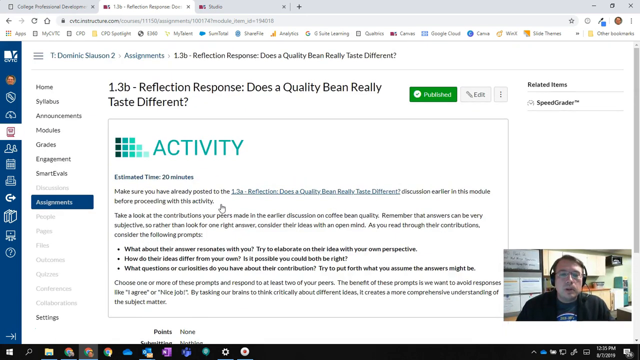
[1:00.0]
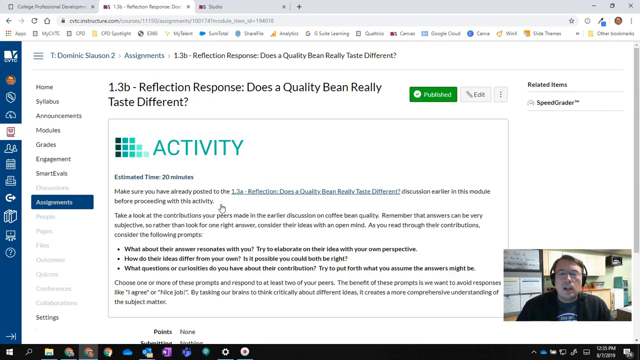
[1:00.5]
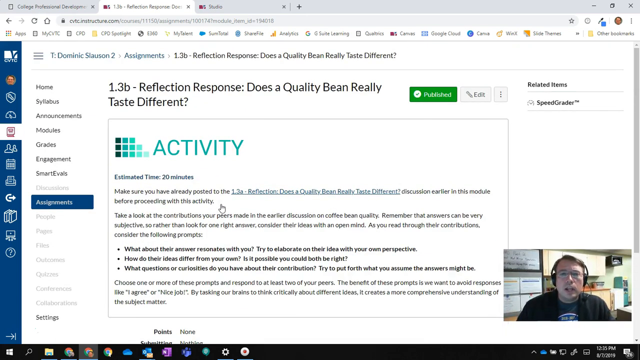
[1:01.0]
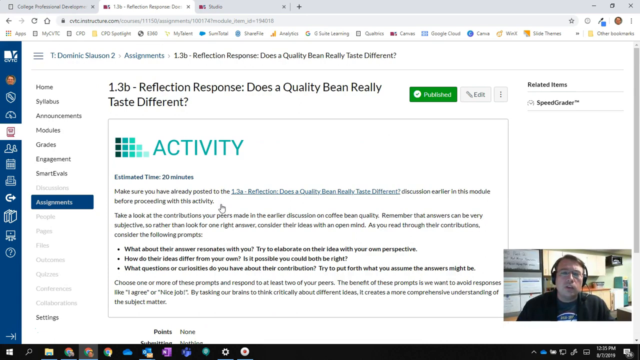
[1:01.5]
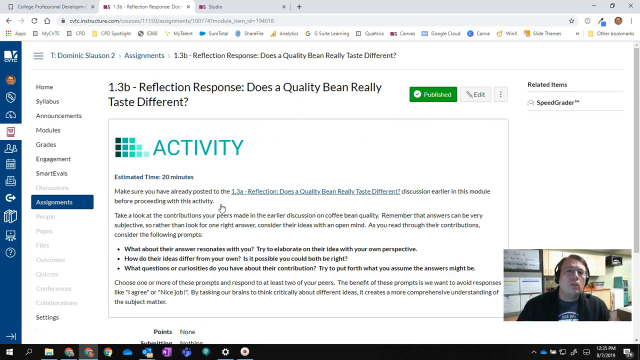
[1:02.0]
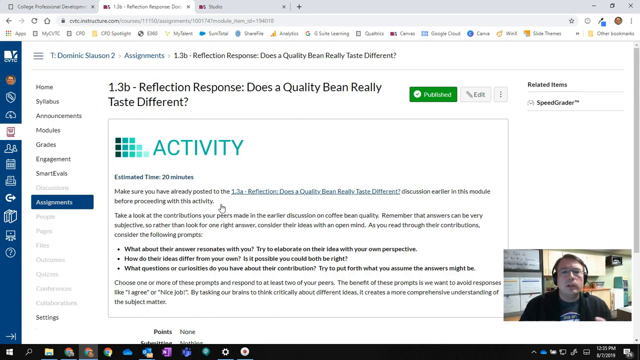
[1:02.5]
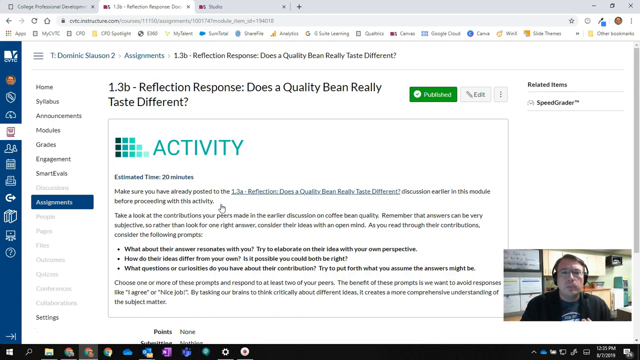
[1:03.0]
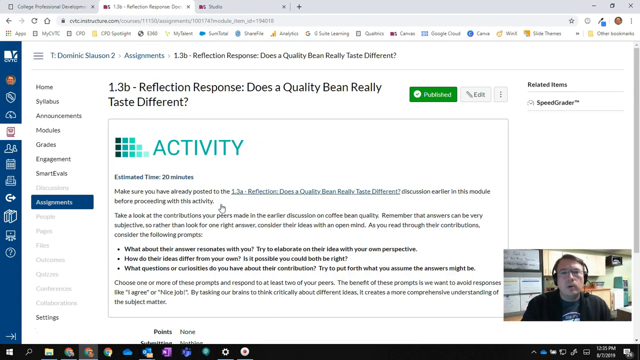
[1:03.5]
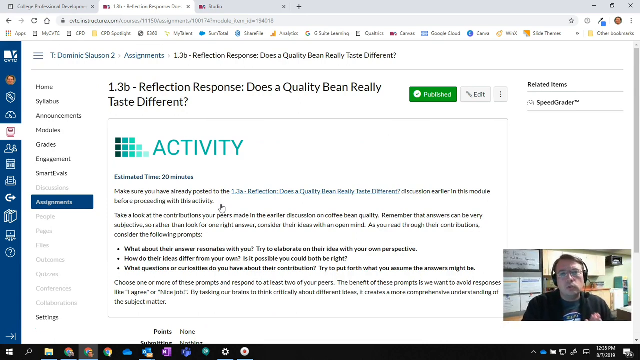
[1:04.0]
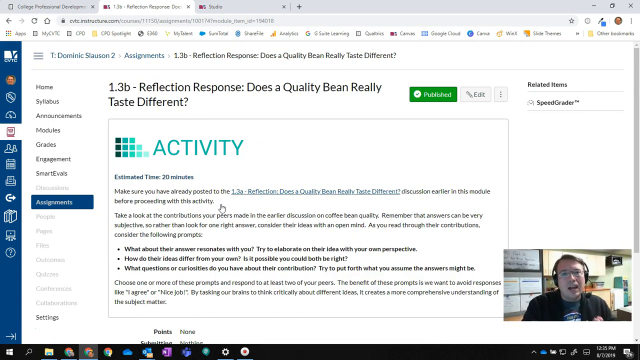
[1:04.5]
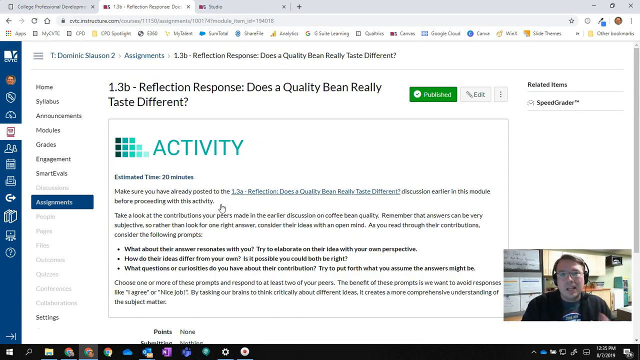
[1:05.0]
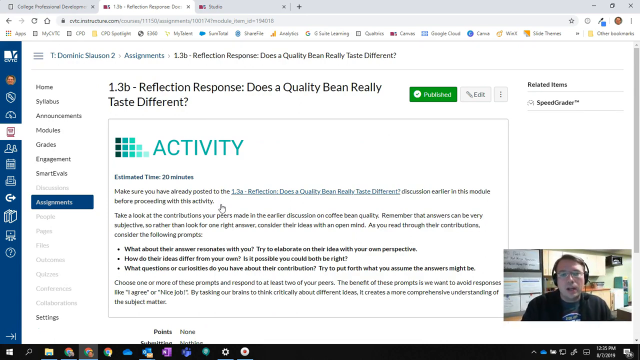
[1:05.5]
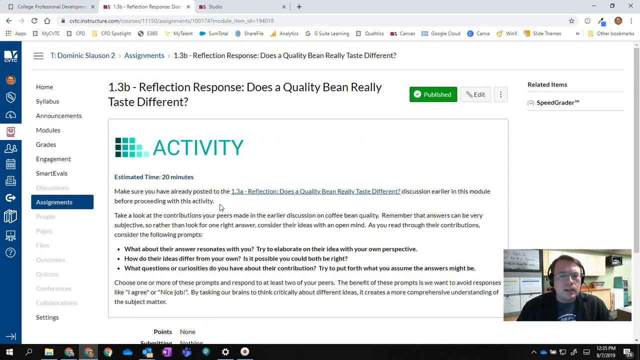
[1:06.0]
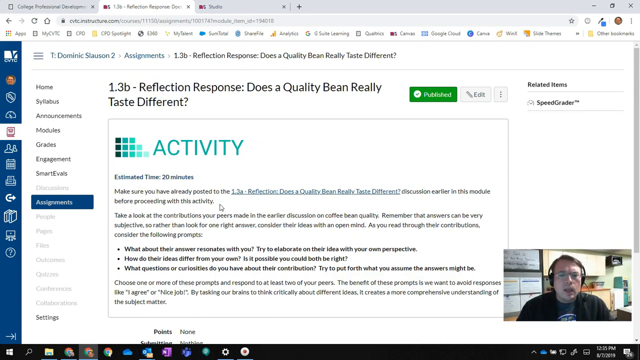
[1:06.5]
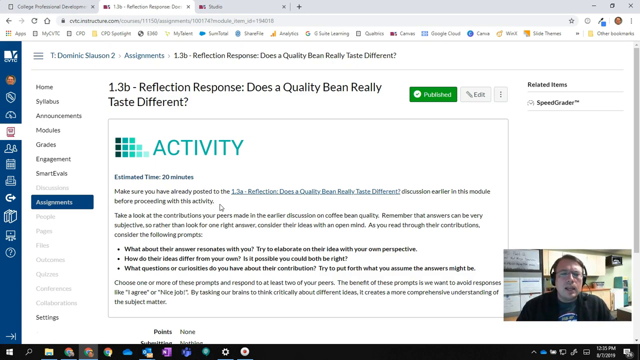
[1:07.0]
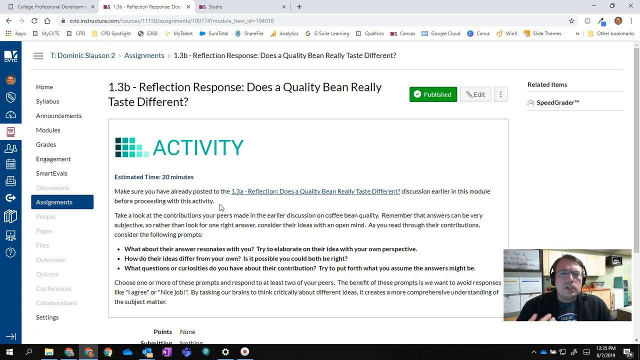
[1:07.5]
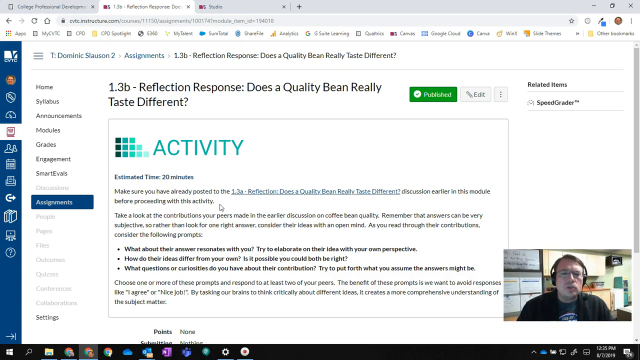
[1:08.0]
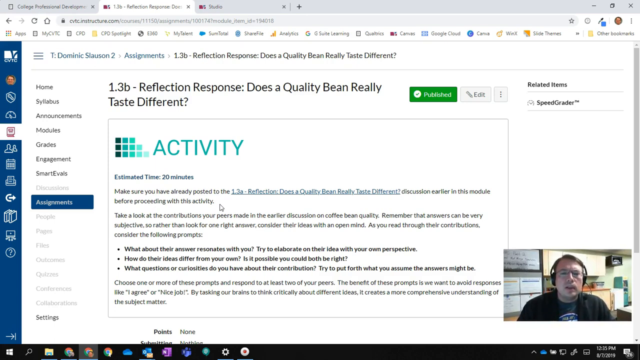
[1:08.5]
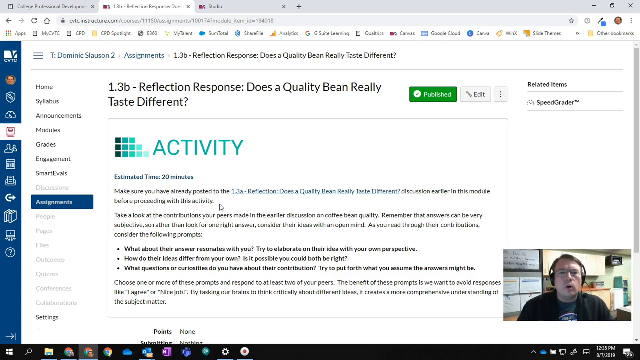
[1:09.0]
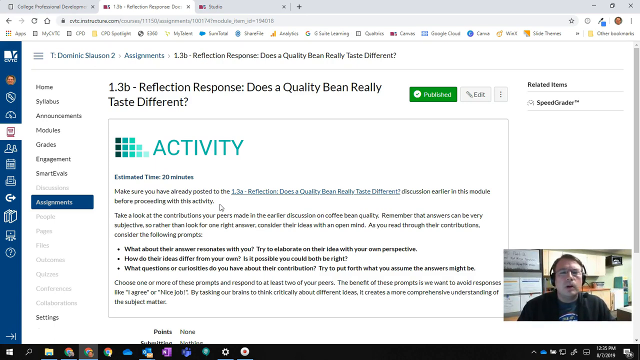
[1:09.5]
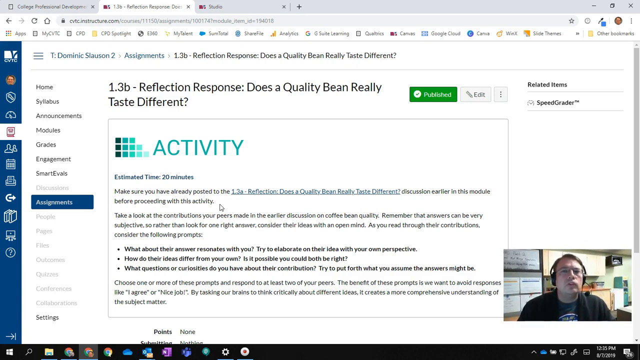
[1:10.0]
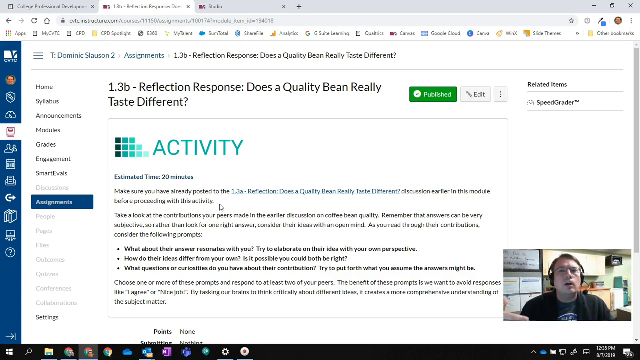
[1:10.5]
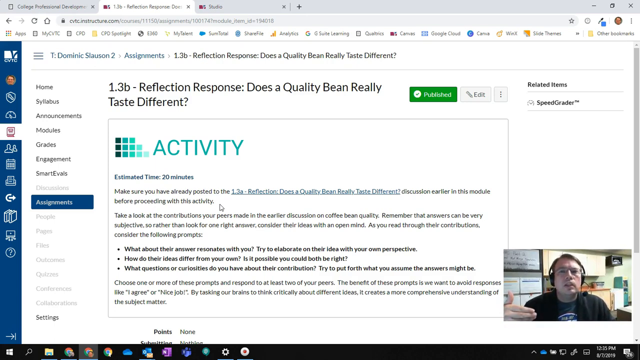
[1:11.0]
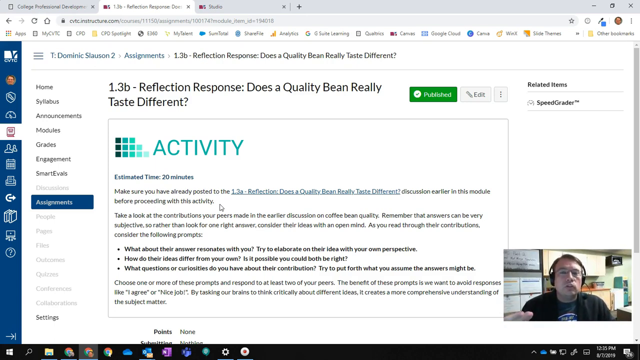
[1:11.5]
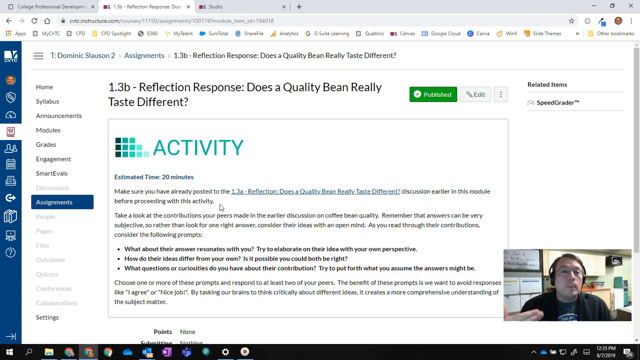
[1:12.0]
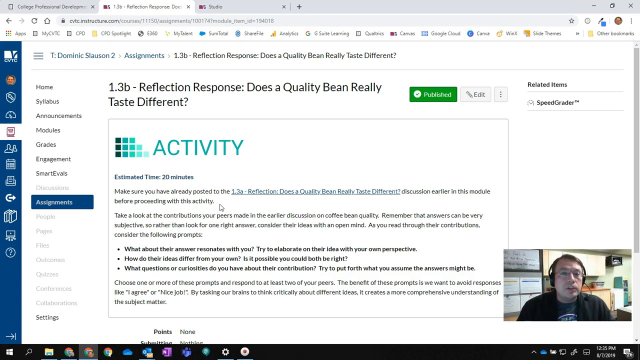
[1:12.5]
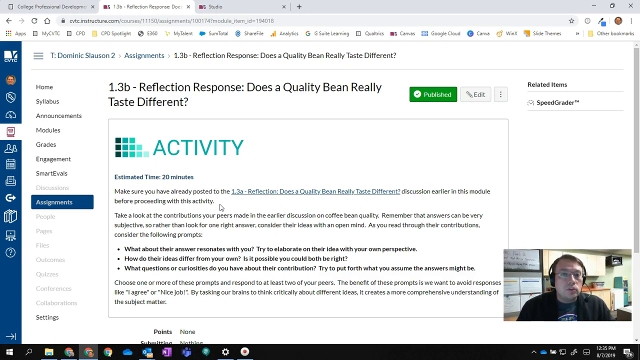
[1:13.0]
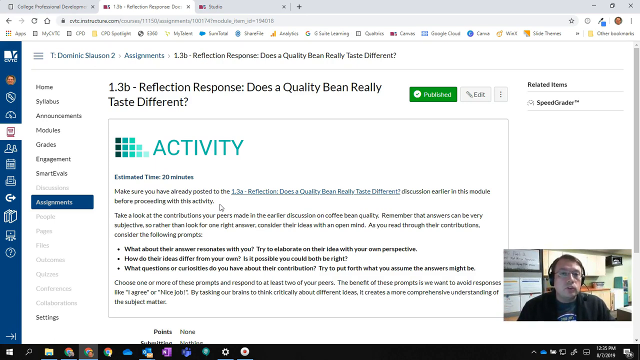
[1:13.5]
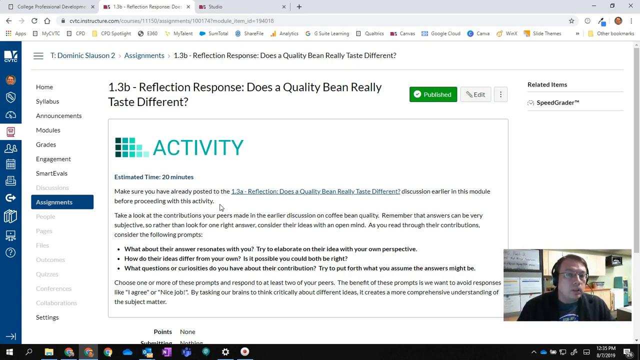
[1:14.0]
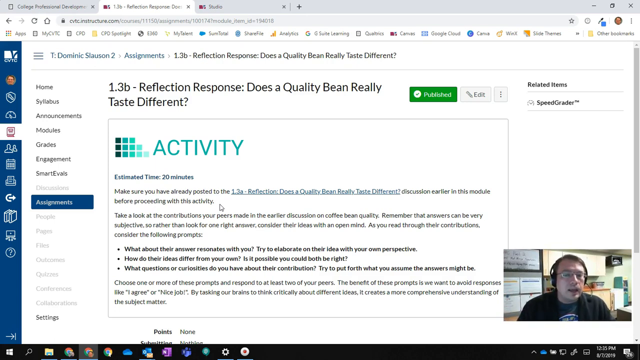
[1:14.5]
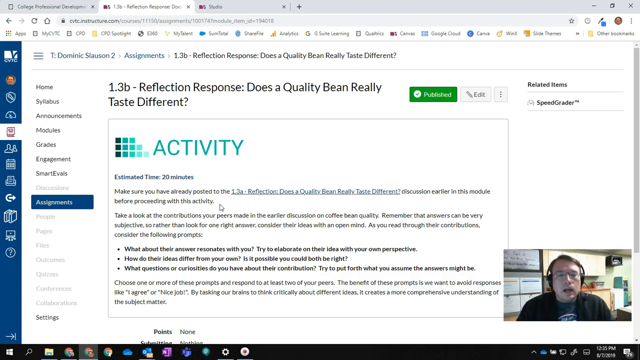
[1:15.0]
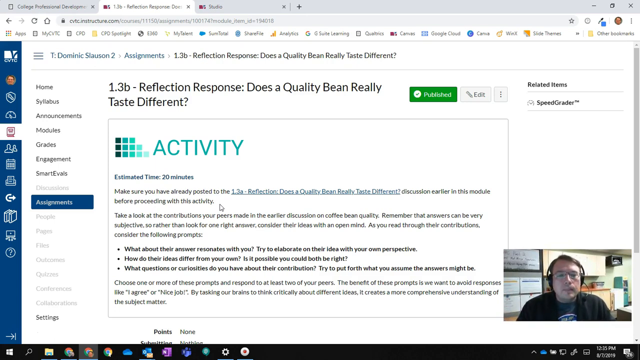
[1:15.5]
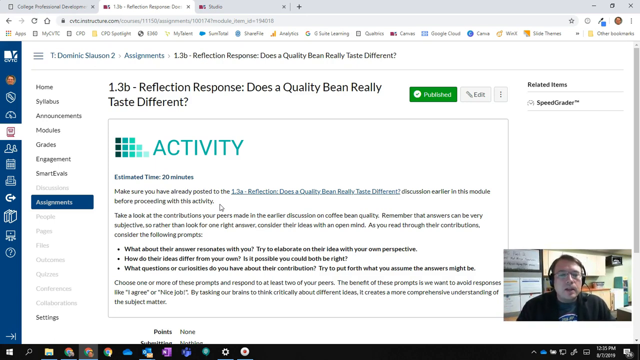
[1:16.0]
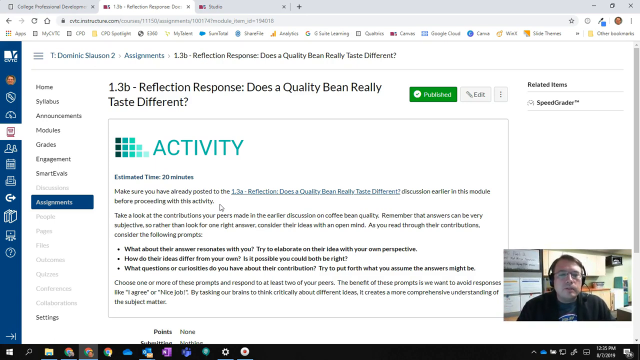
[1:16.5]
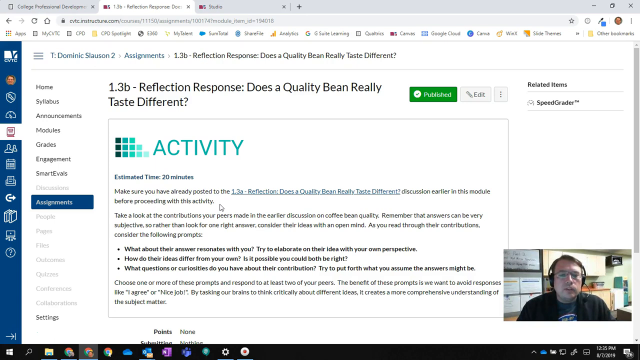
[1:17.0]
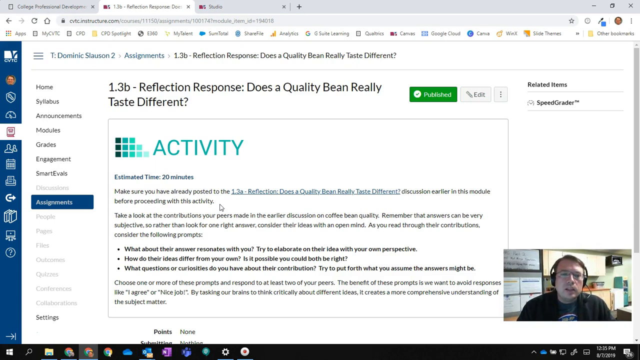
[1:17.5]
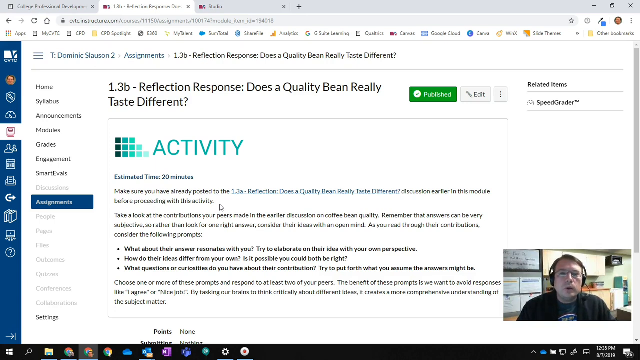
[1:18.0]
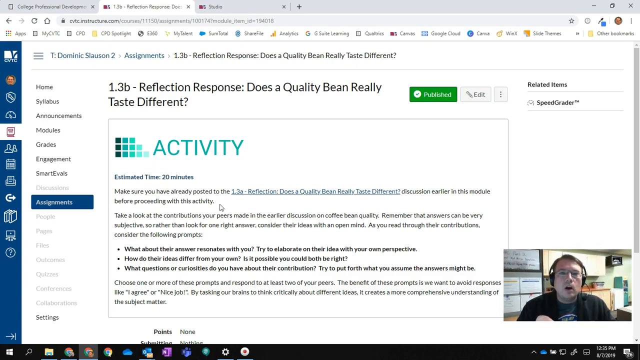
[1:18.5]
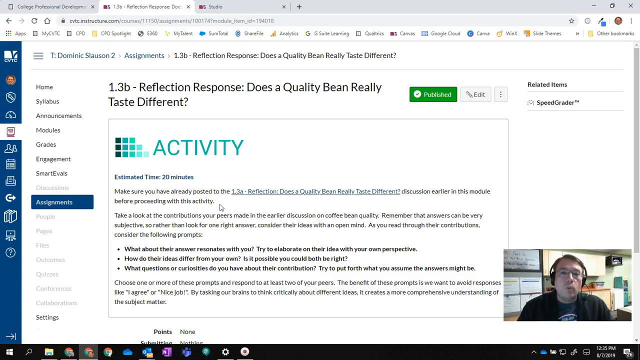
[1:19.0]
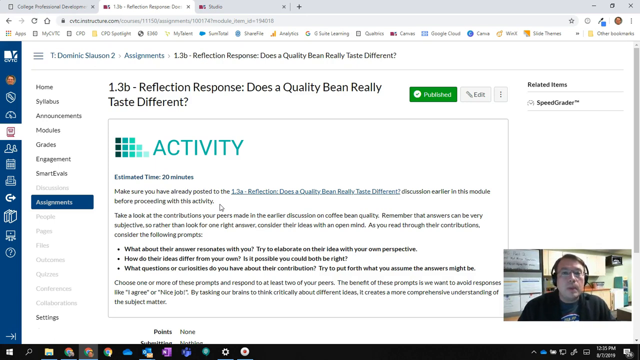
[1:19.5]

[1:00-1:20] A man wearing black glasses and a black blazer introduces himself. He shares his PC screen; on the left side is a menu, and he presses modules on it. He seems to be an online tutor. He keeps scrolling down, then goes to a page labelled activity and scrolls further, showing activities for topic 1.3b.